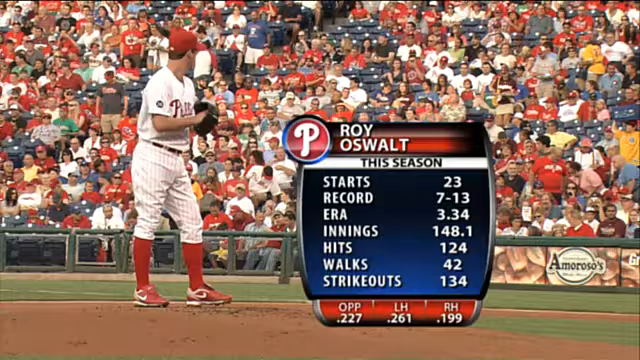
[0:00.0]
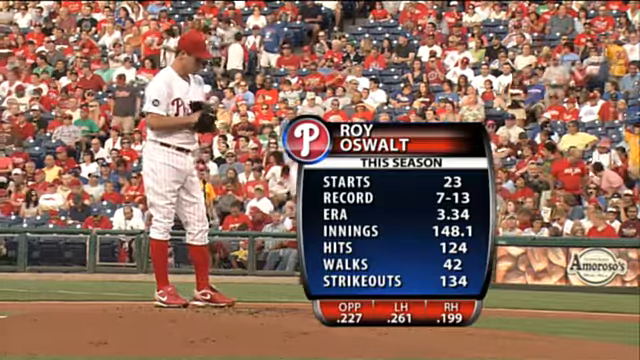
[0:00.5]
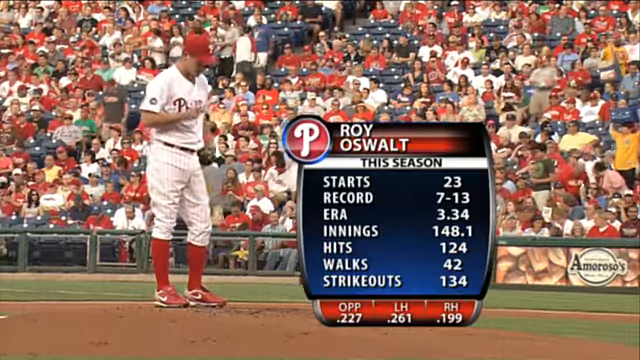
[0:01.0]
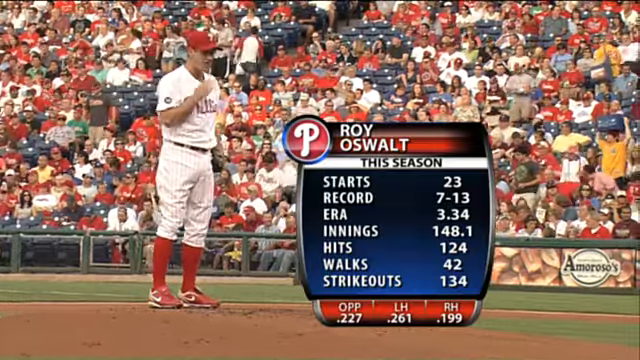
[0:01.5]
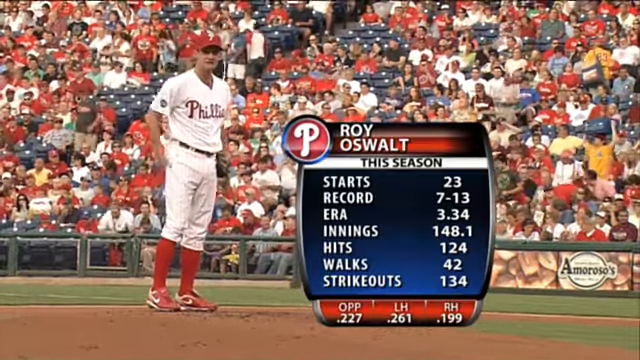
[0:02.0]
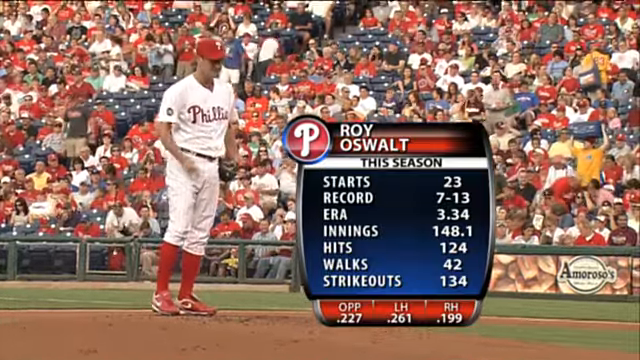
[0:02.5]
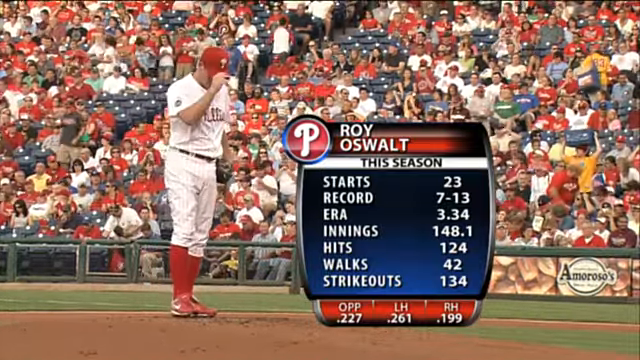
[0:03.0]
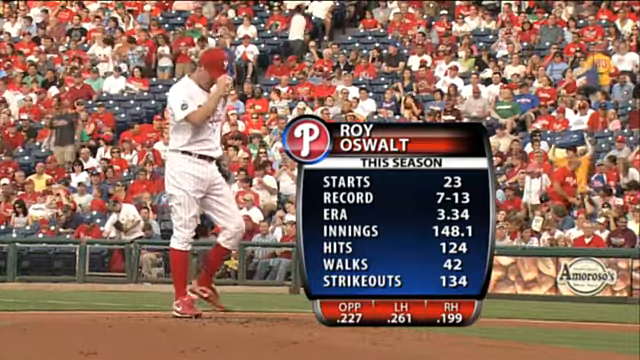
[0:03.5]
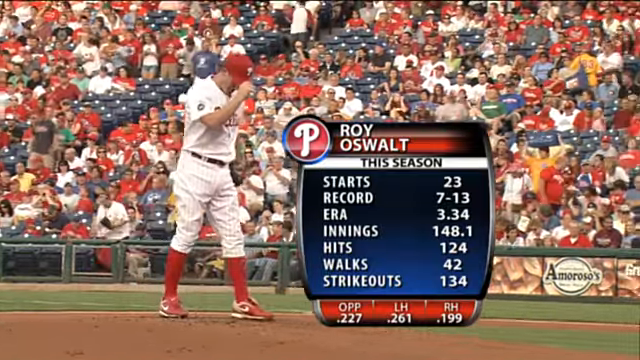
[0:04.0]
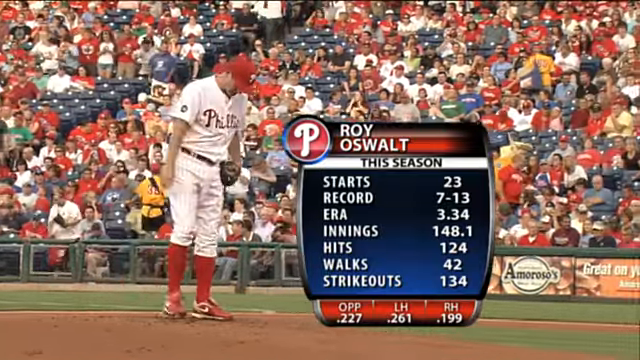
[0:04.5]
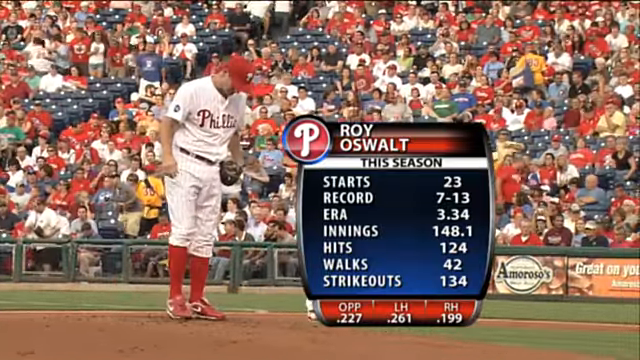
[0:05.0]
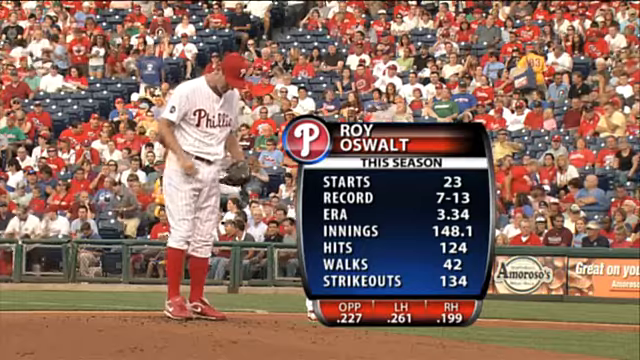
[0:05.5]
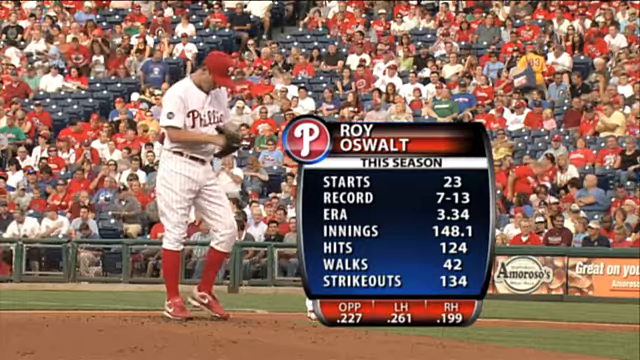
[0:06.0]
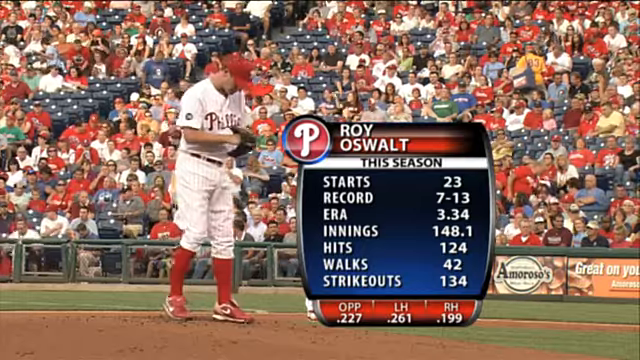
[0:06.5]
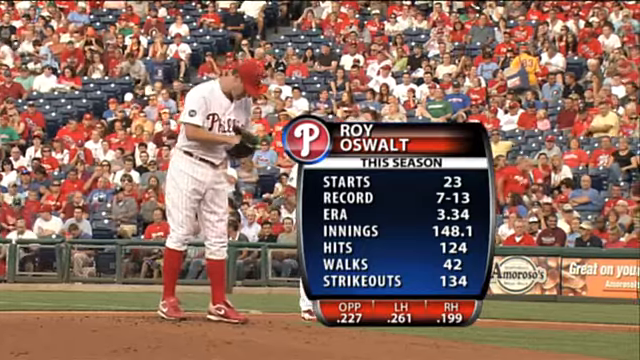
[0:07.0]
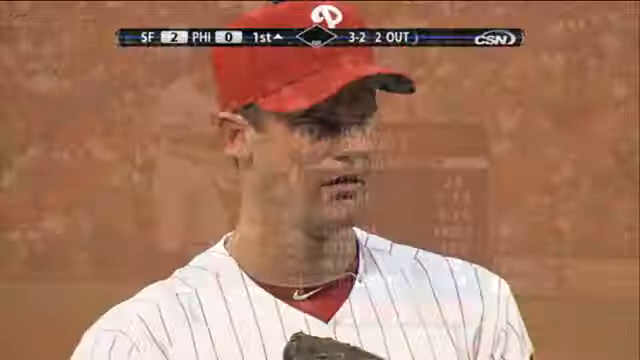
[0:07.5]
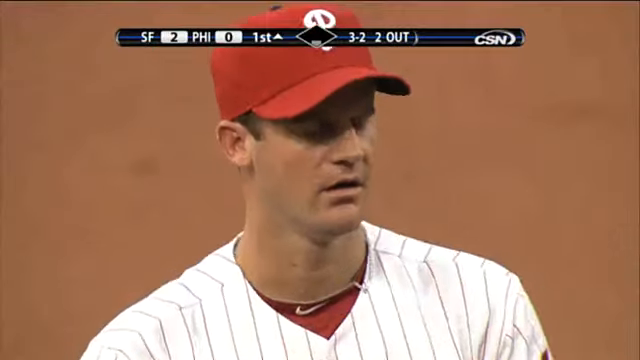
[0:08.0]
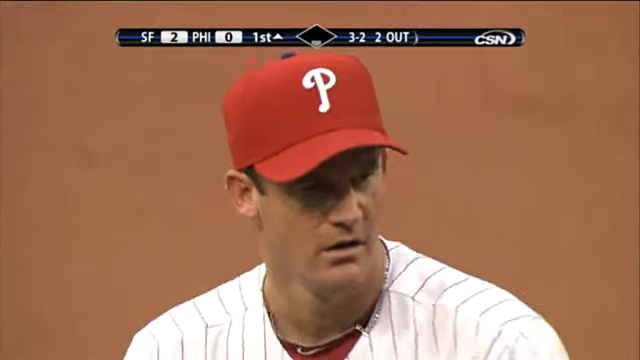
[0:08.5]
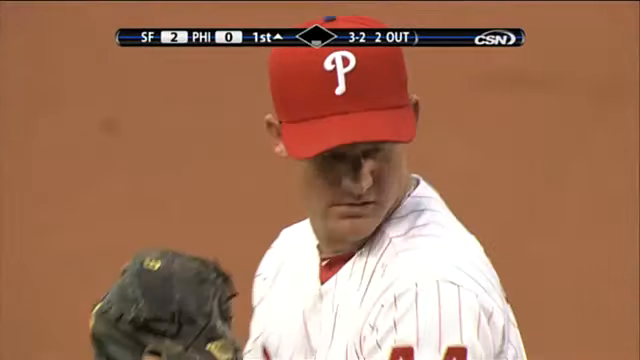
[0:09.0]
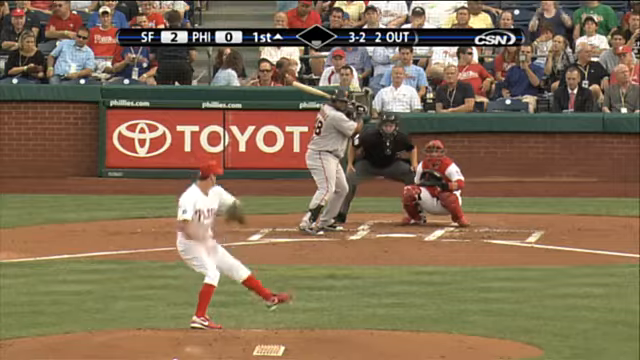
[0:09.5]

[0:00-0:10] A Major League Baseball game features pitcher Roy Oswalt. His record is given as 7 and 13, with an ERA of 3.34. Before throwing a pitch, he is kind of looking around, with his hand kind of in his glove. As he gets ready to set, he kind of licks his fingers for a moment and kind of adjusts the bill of his hat with his right hand, then walks up to the mound and kind of kicks it for a second. A zoomed-in shot shows his windup, followed by a zoomed-out shot: he winds up kicking his left leg, pulls his arm all the way back and goes through the arm rotation, kind of falling off to the left a little as he does. The batter appears to be someone named Sandoval, the Giants player. He is in the middle, kind of winding up and ready to hit, with his right leg kind of kicked up in the air and his left leg down.